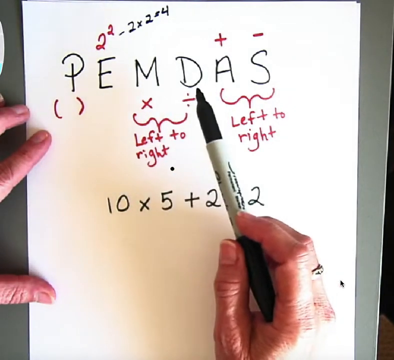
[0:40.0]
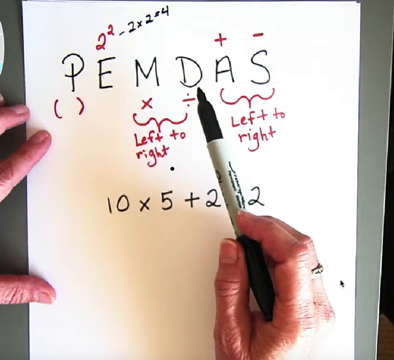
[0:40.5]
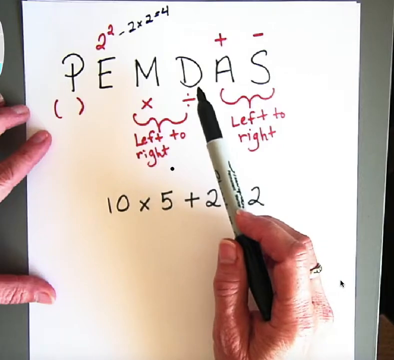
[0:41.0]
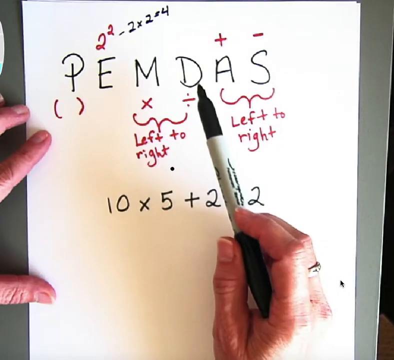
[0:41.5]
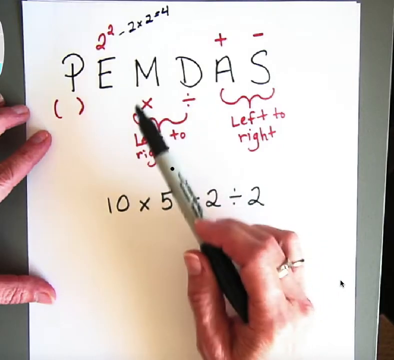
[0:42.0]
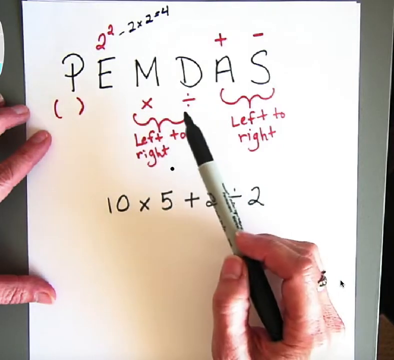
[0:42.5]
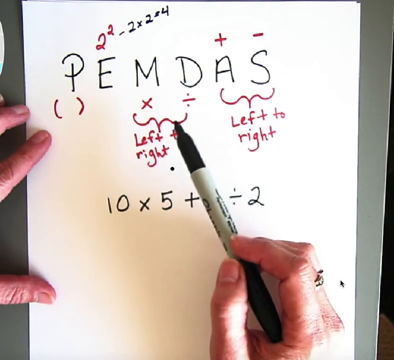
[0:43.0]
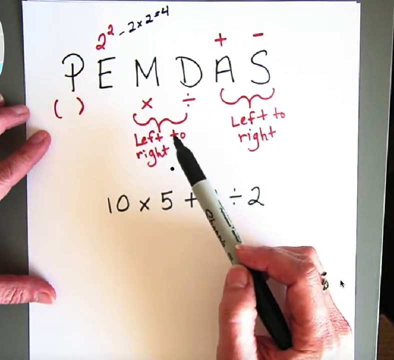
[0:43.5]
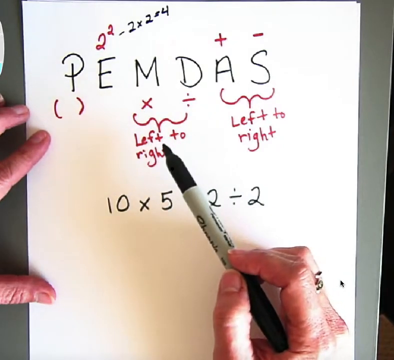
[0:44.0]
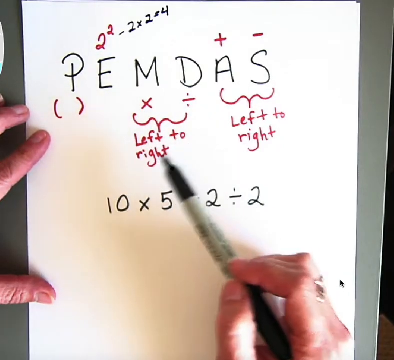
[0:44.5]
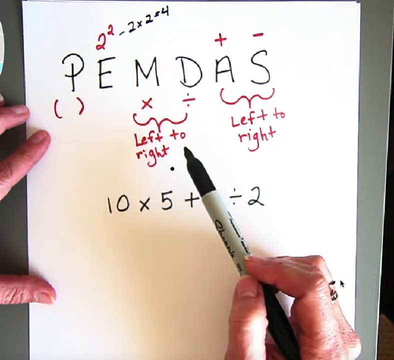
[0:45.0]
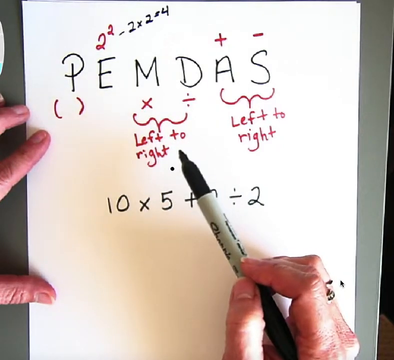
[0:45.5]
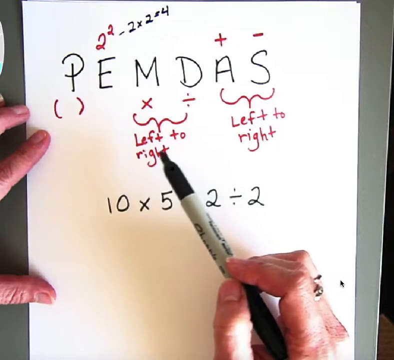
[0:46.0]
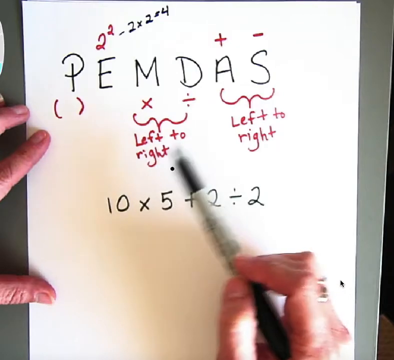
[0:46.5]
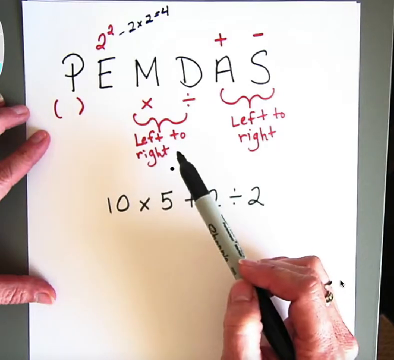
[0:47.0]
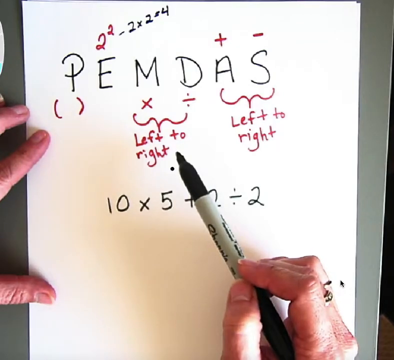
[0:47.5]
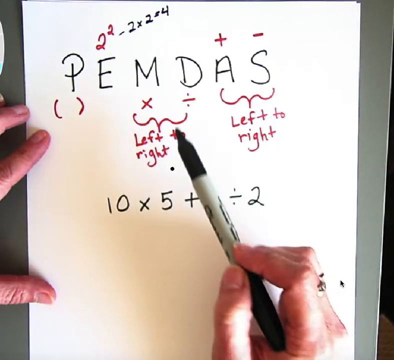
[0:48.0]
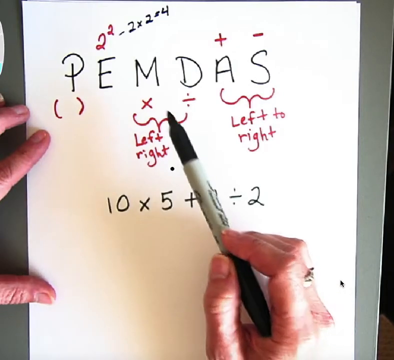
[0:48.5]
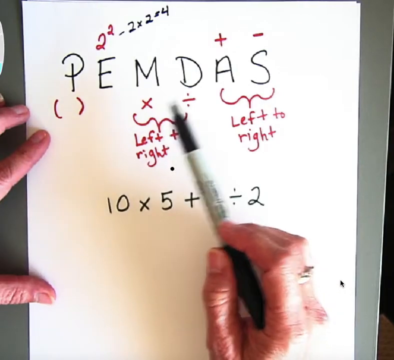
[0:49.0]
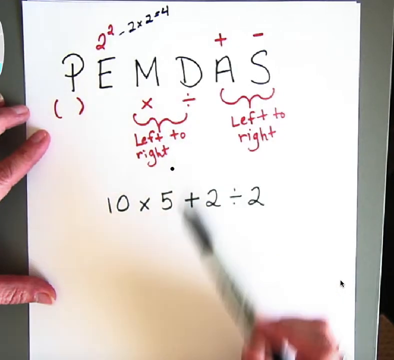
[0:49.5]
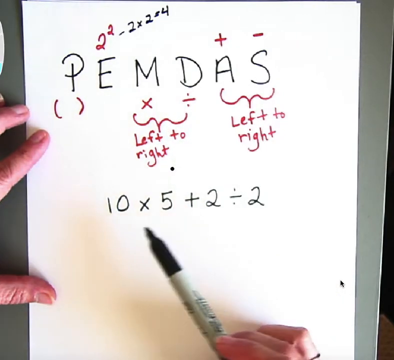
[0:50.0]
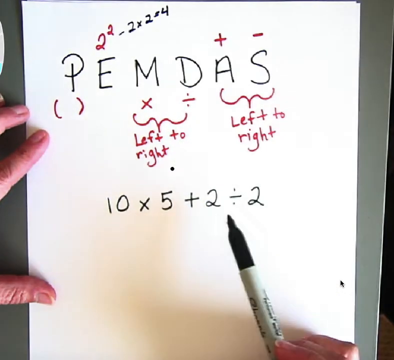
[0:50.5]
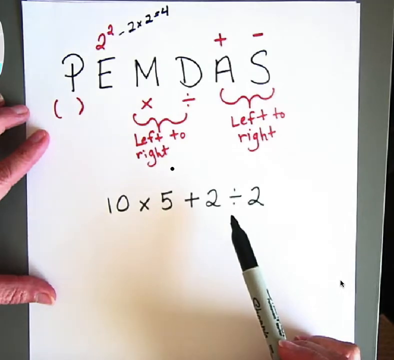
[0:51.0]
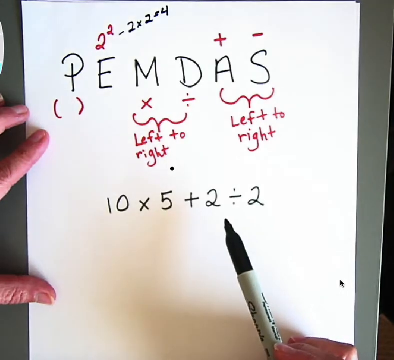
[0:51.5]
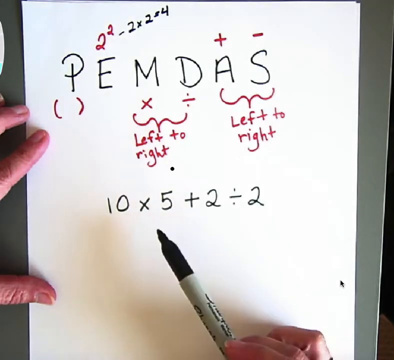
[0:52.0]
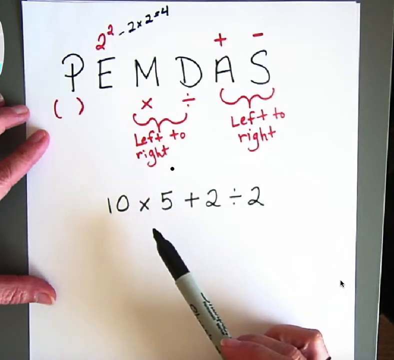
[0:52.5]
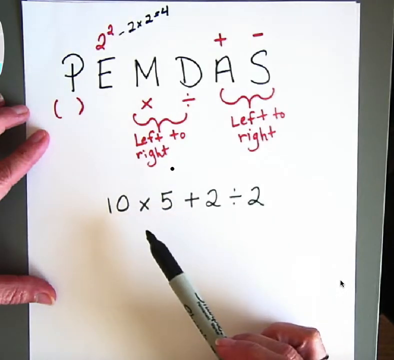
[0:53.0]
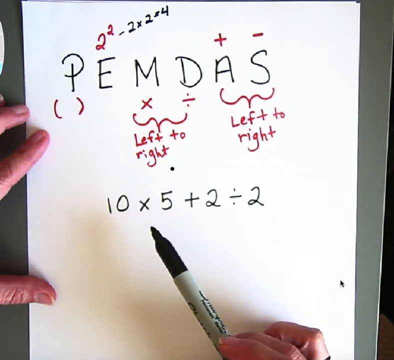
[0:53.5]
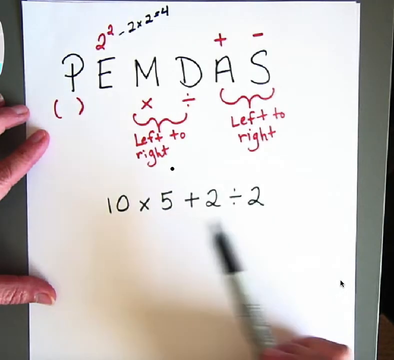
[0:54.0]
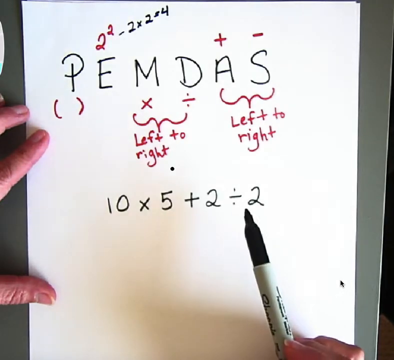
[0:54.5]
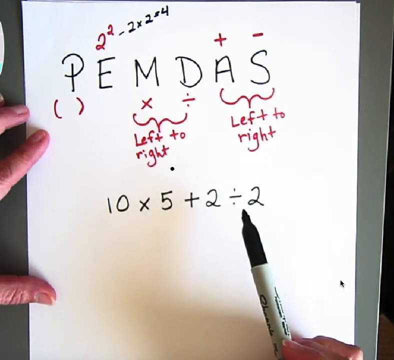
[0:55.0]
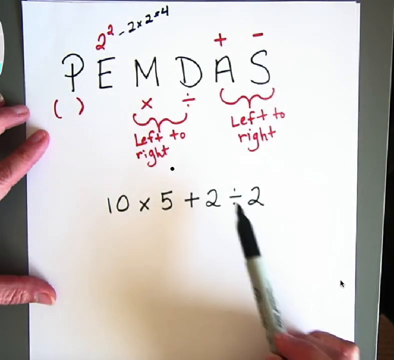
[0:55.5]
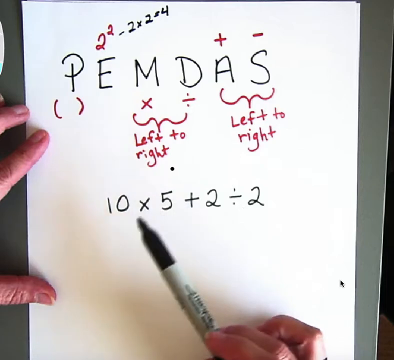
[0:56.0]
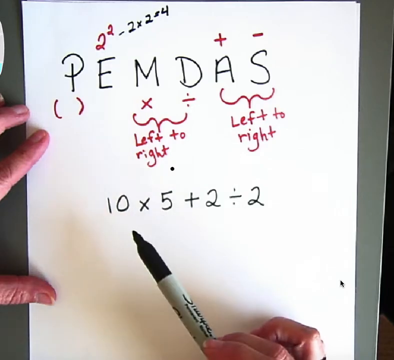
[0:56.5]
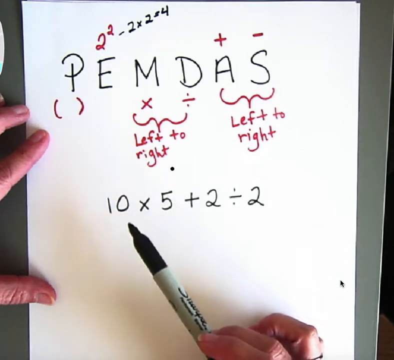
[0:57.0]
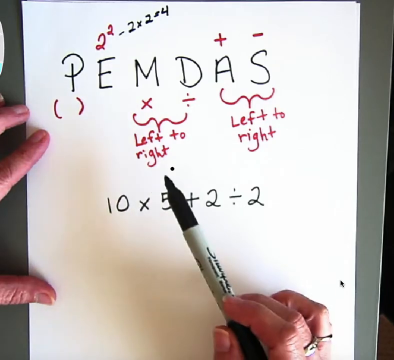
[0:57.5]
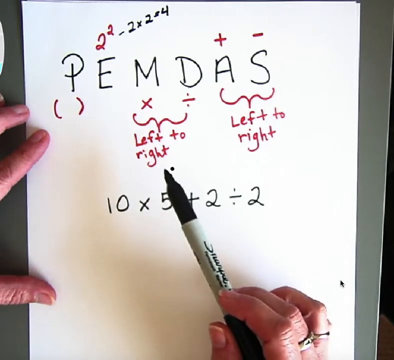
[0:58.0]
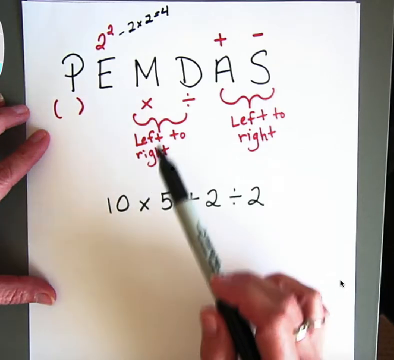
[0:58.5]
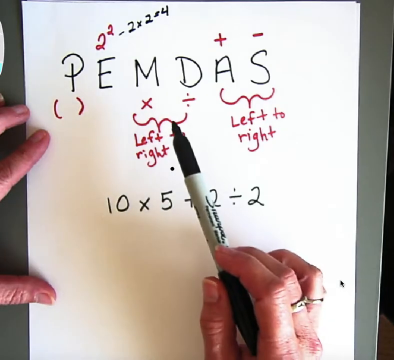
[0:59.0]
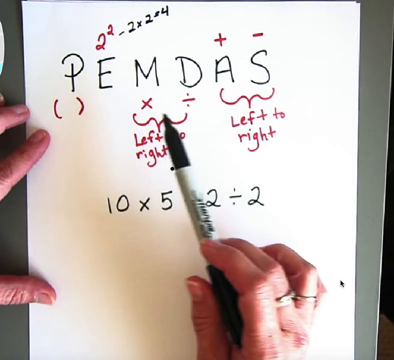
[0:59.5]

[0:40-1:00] One hand holds a white piece of paper on the left while the other hand holds a black marker. Written on the paper in capital letters, with spaces between each letter, is "PEMDAS". Above the E is a formula: a red 2 with a small 2, like 2 to the second power, and the rest in black, minus 2 times 2 equals 4. Under the P is a red parenthesis symbol, under the M an X symbol, and under the D a division symbol, with a little squiggly line pointing to the statement "left to right". Above the A is a plus sign and above the capital S is a minus sign, and under the A and S a squiggly sign leads to the statement "left to right". At the bottom of the paper, under the equation, is another math equation, 10 times 5 plus 2.